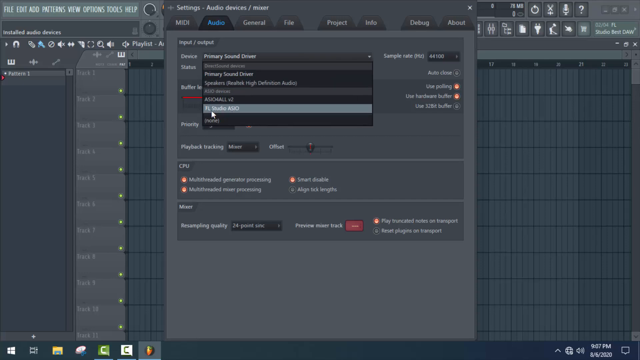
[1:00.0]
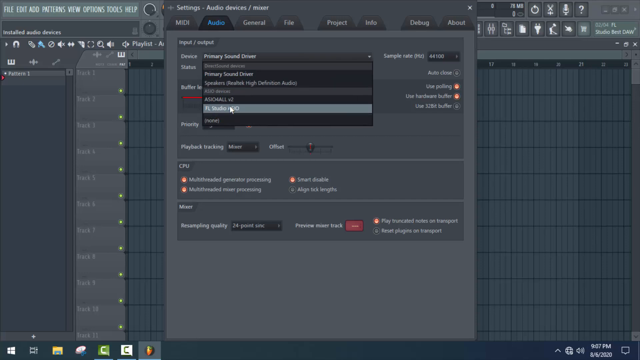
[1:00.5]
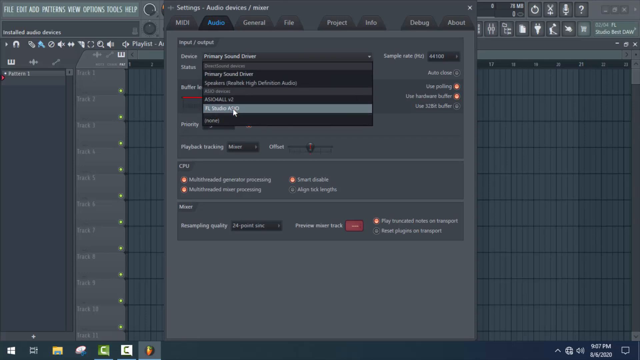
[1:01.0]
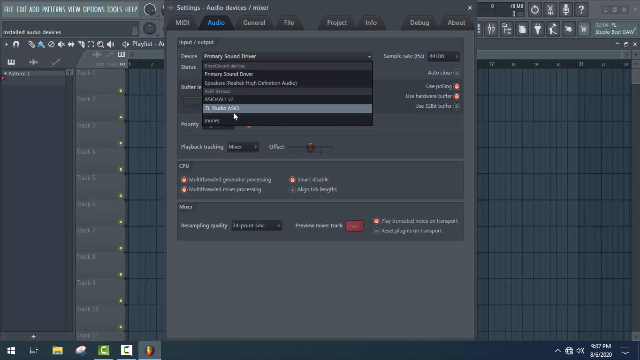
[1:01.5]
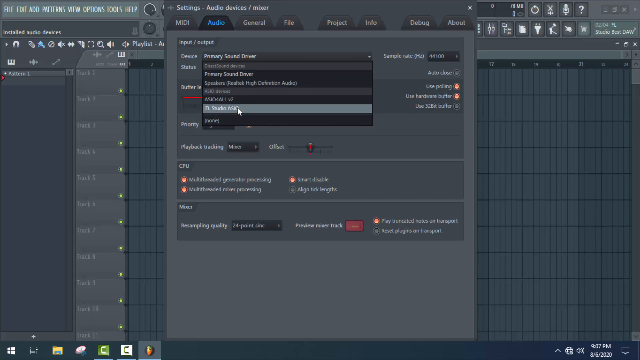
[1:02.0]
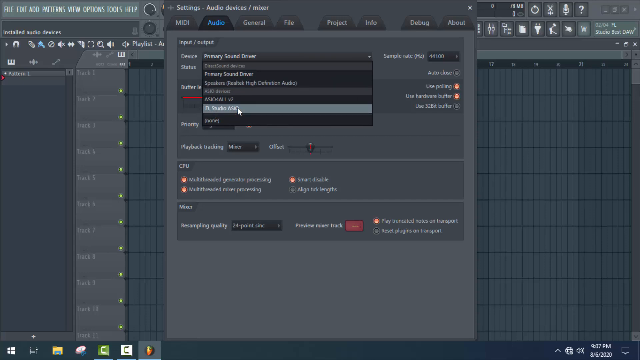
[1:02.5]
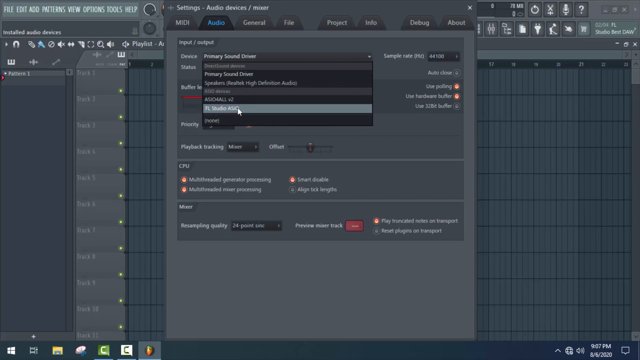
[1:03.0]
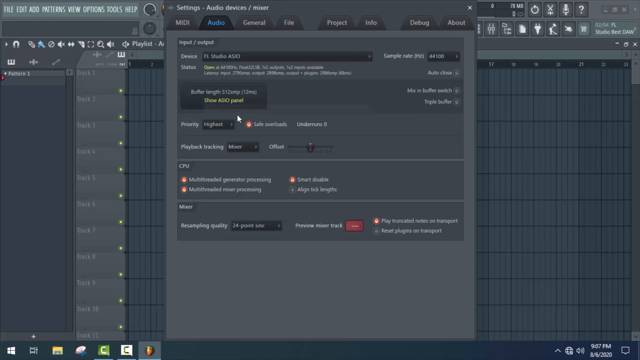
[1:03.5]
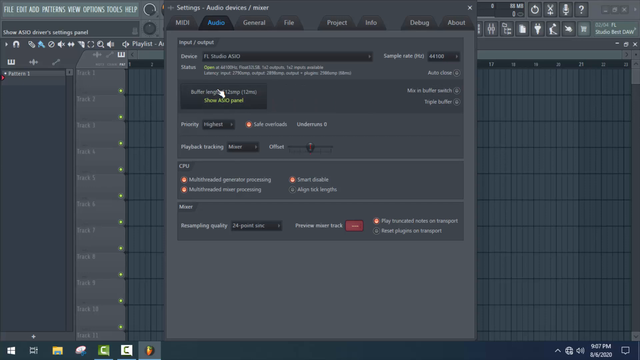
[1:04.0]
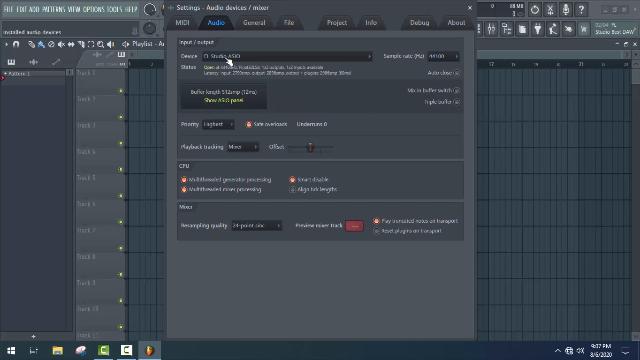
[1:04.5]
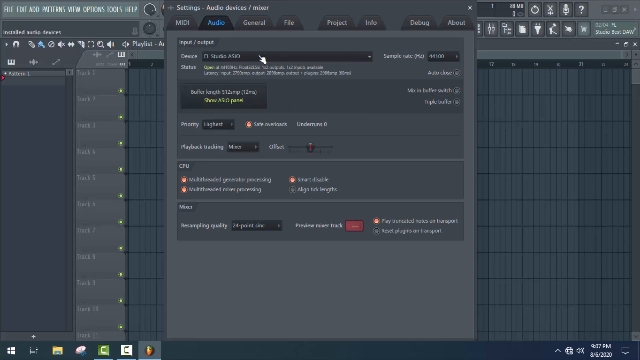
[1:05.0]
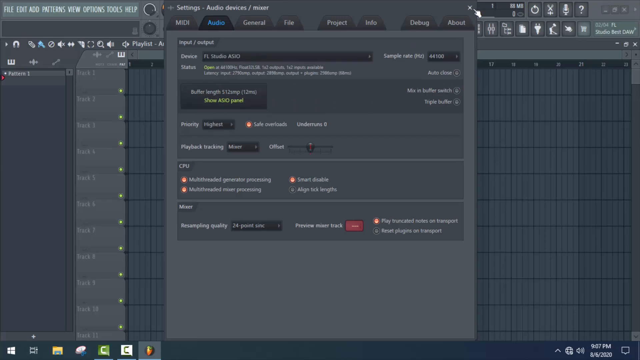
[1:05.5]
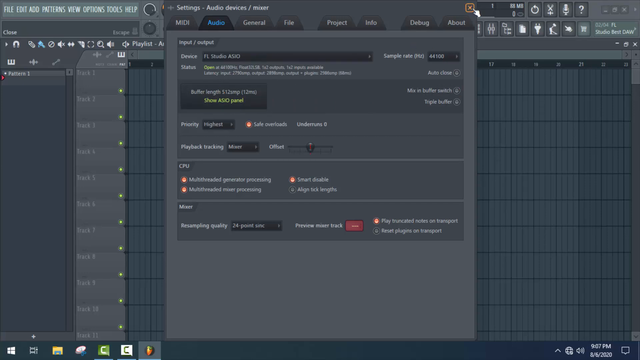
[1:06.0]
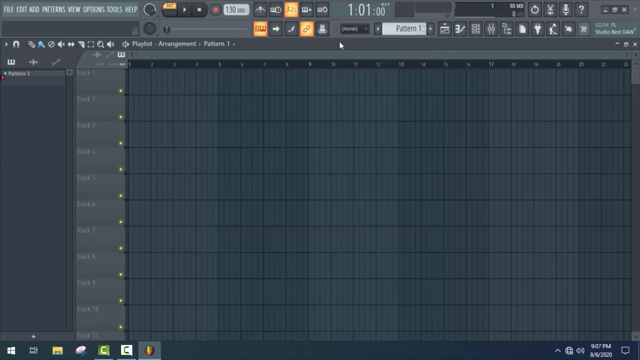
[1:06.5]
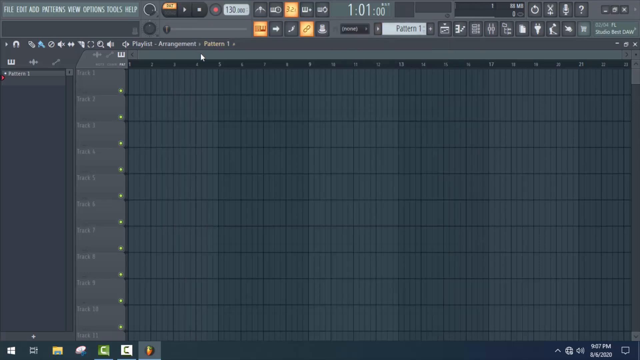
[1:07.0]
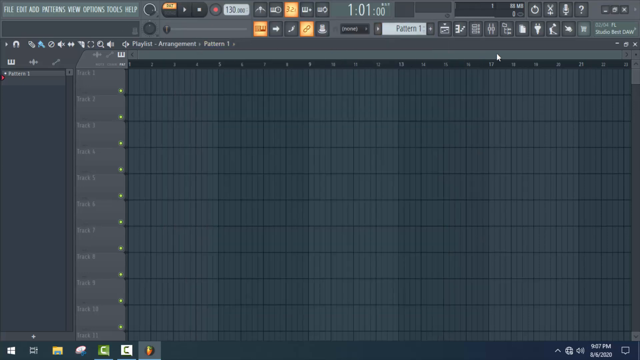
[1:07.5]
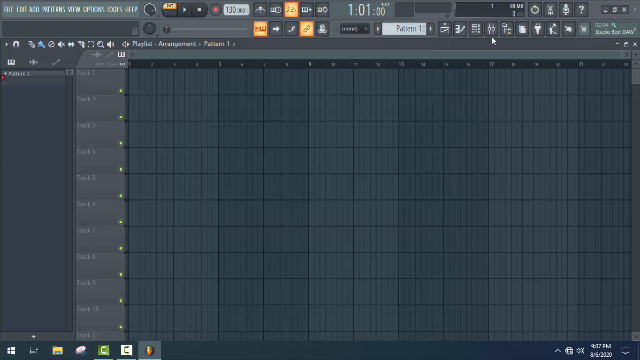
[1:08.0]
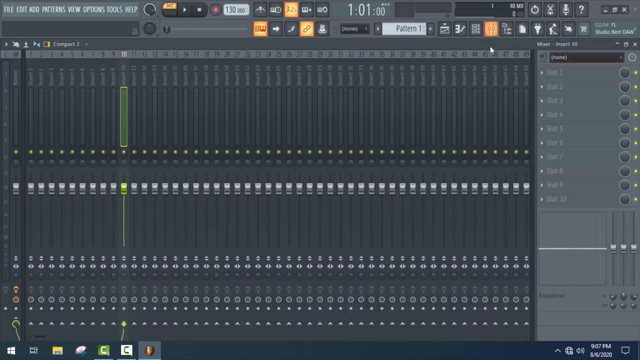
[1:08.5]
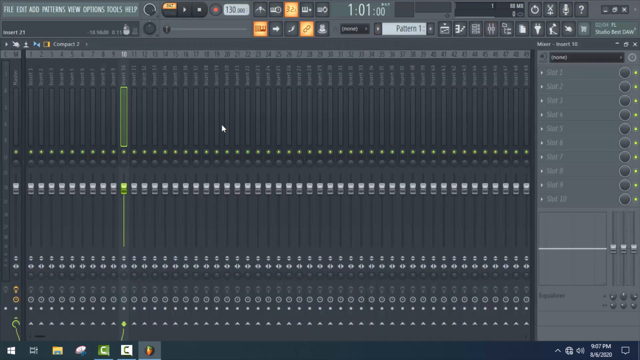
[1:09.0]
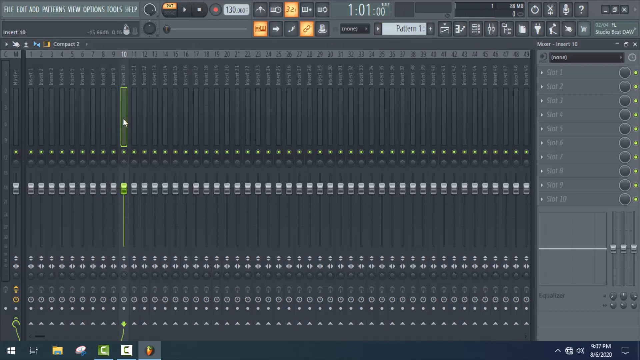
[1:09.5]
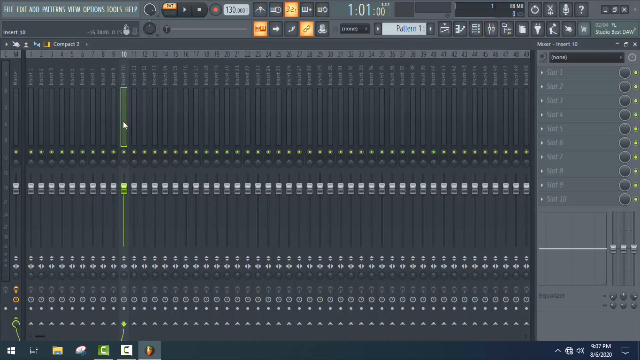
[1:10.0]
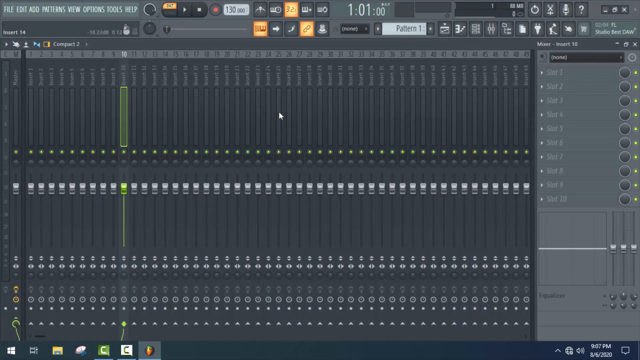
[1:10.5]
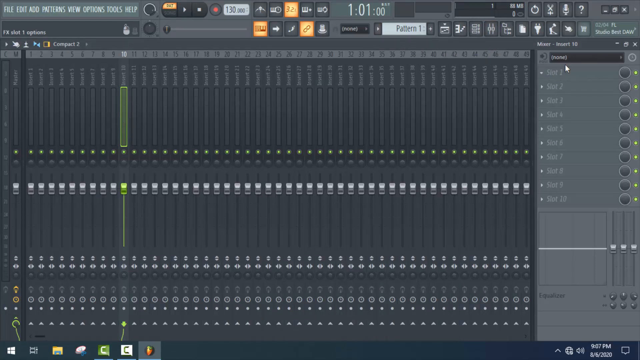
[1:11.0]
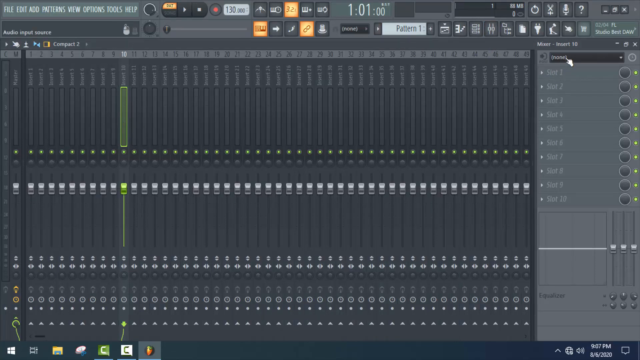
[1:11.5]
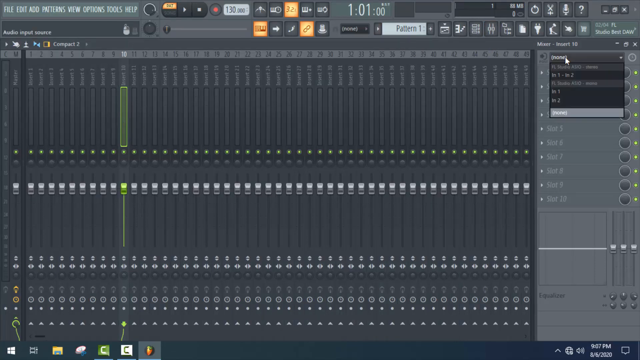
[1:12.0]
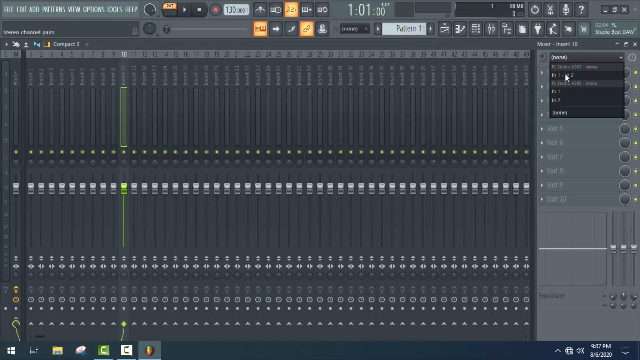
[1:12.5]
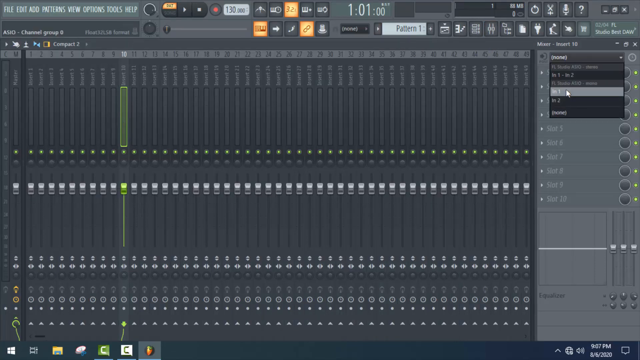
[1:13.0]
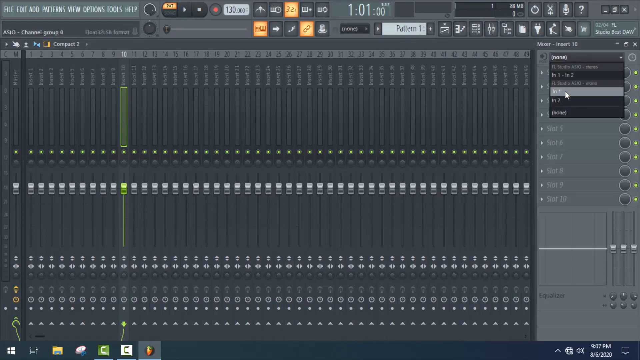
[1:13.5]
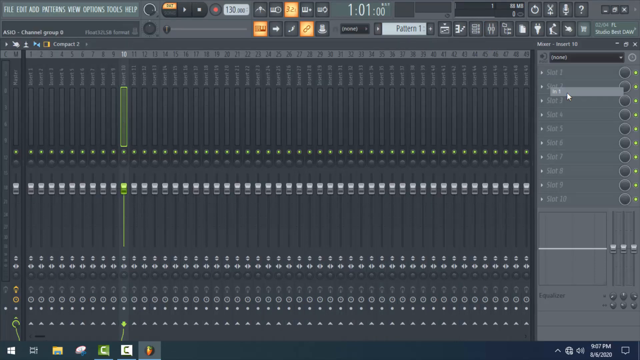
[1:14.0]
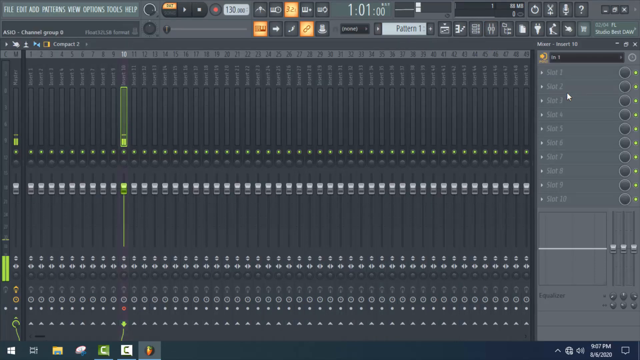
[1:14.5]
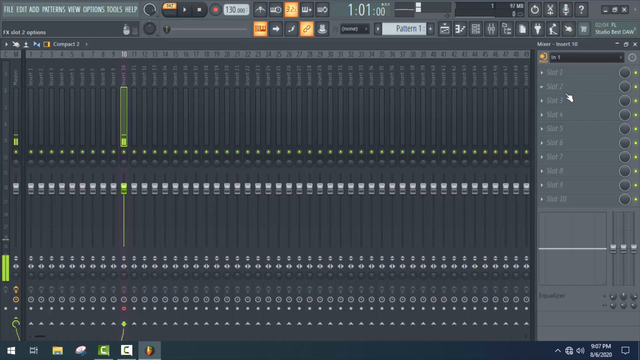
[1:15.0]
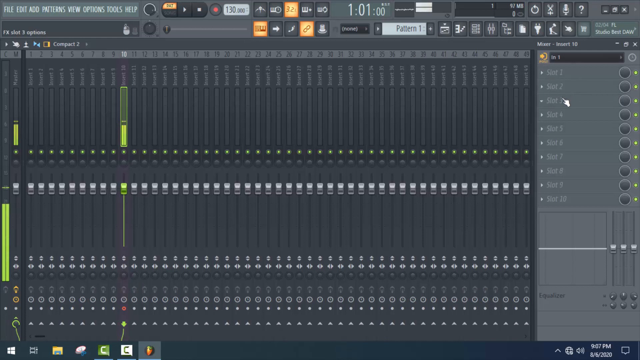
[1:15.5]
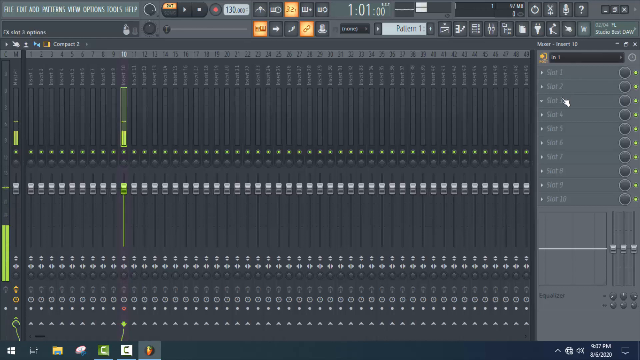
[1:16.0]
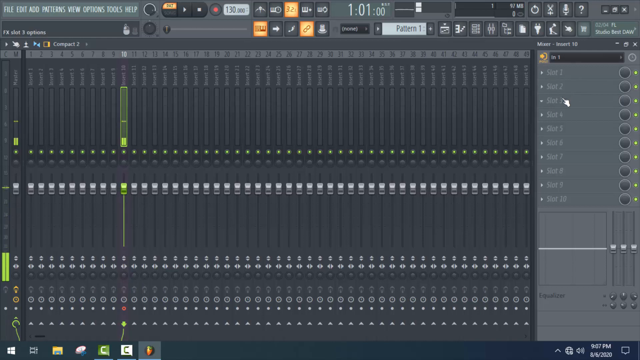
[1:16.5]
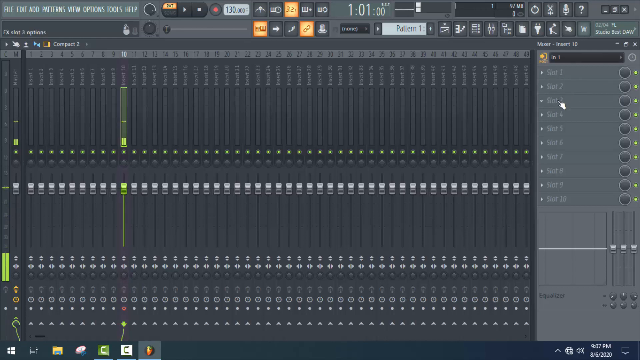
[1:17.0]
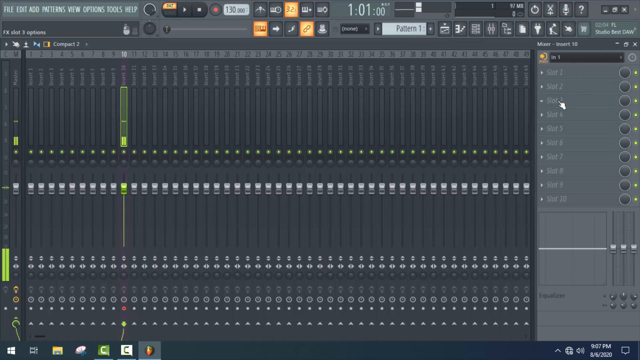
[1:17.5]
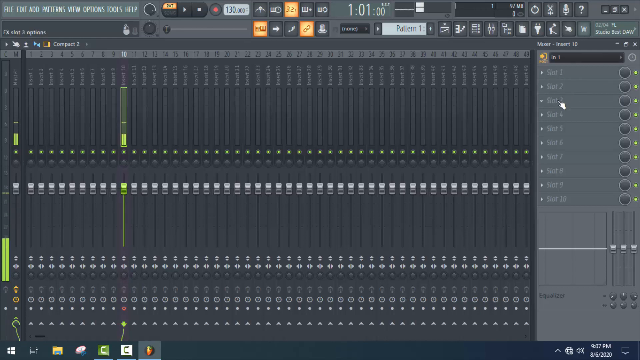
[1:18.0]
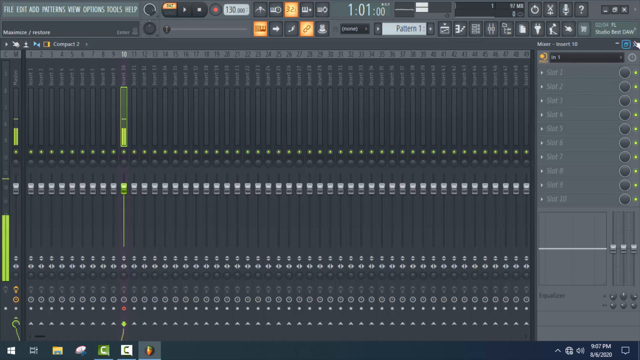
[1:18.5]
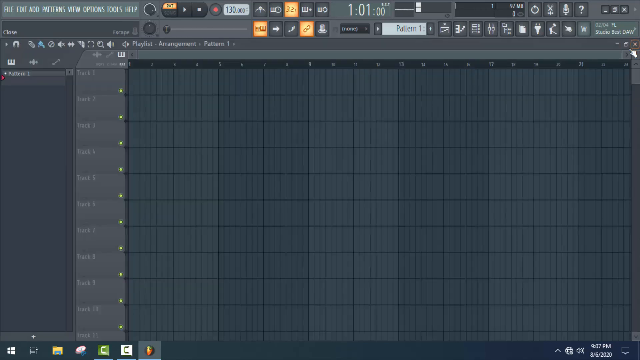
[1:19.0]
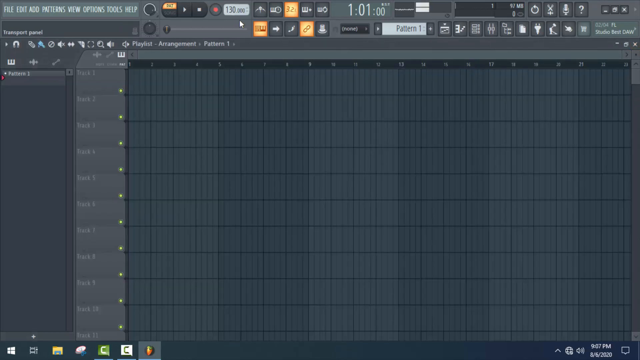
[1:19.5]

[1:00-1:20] The software remains on screen as he clicks through different buttons, apparently finding things to show the viewer. He looks to be testing out some parts of it or showing how to use it.